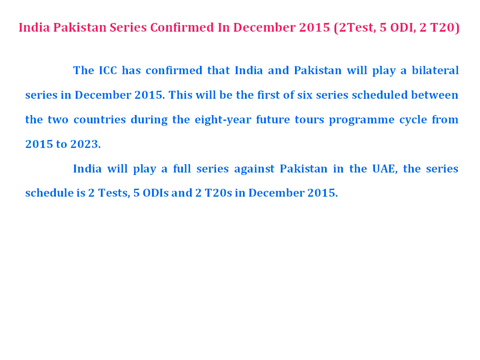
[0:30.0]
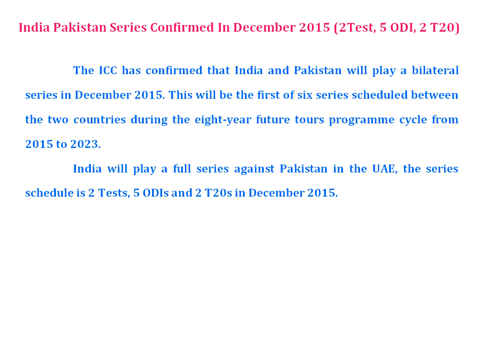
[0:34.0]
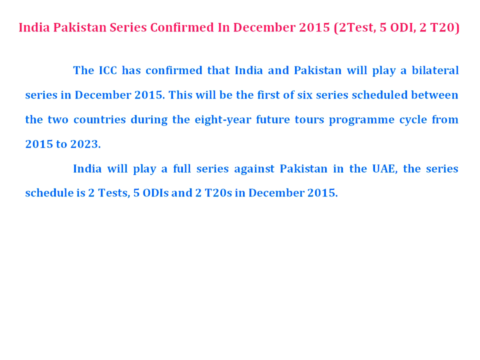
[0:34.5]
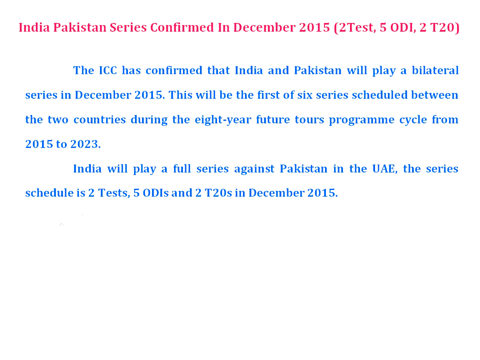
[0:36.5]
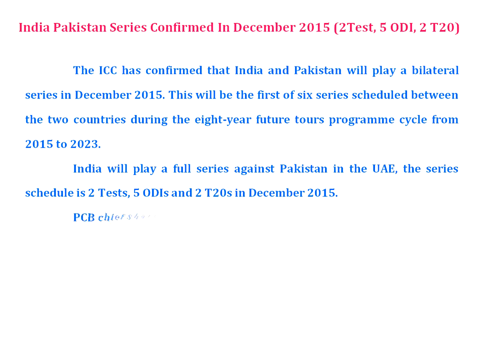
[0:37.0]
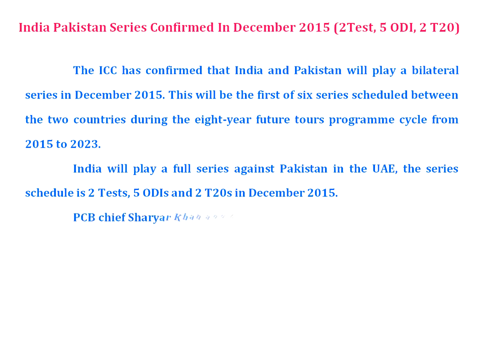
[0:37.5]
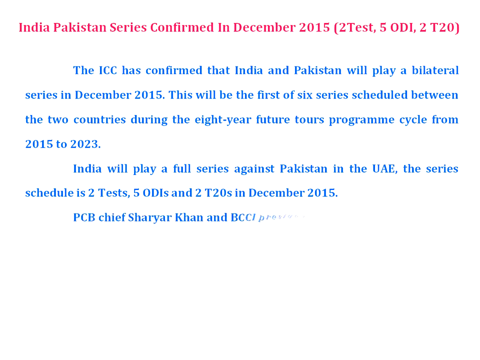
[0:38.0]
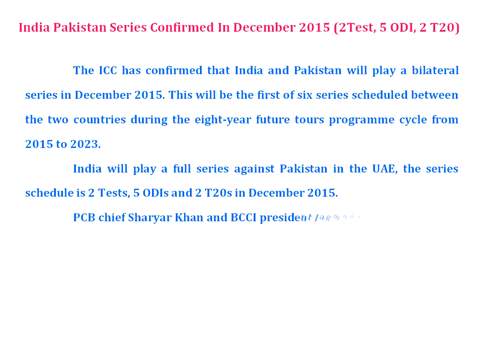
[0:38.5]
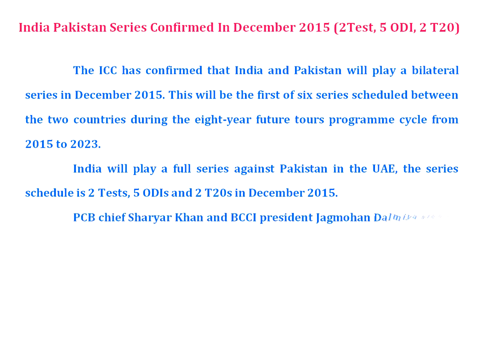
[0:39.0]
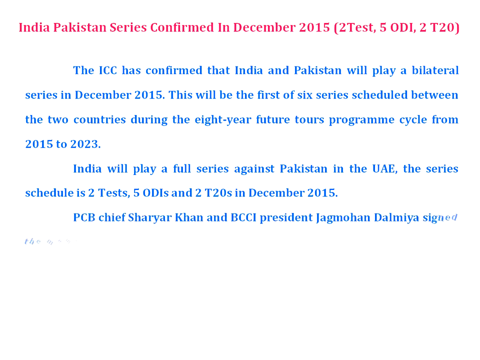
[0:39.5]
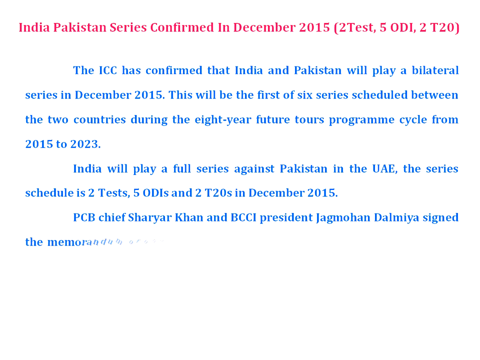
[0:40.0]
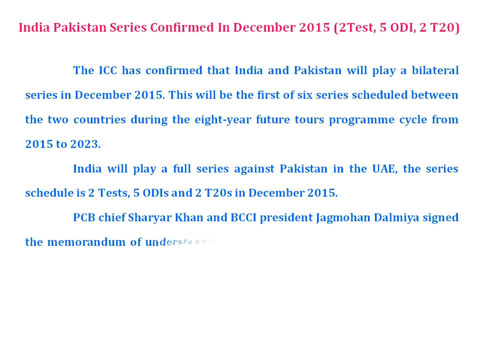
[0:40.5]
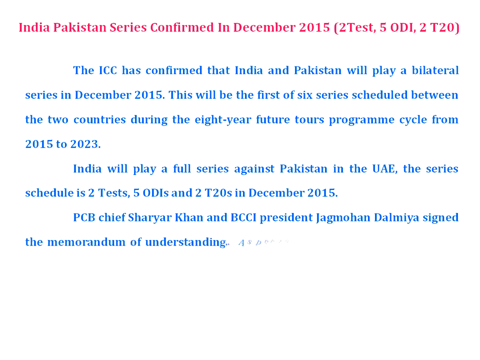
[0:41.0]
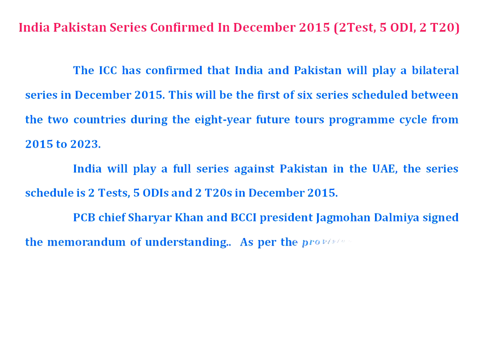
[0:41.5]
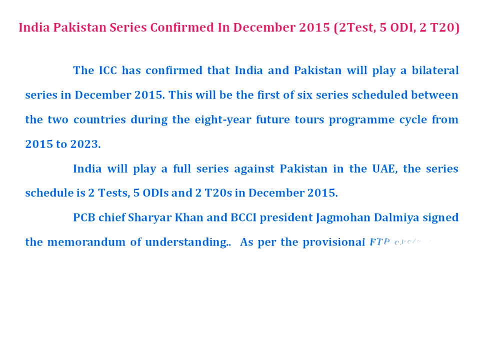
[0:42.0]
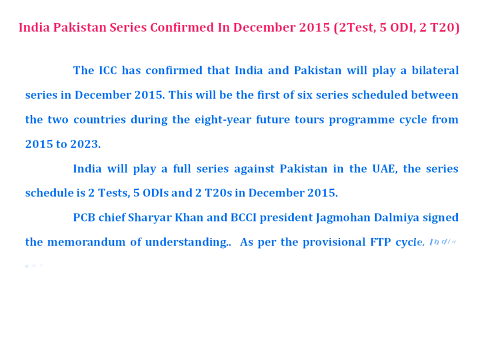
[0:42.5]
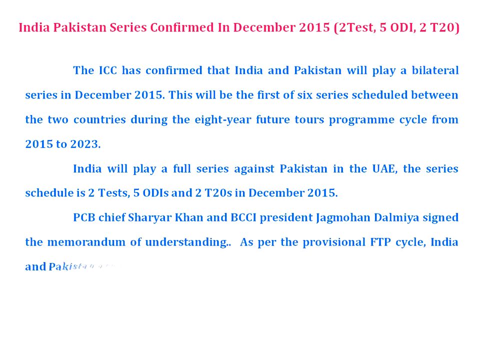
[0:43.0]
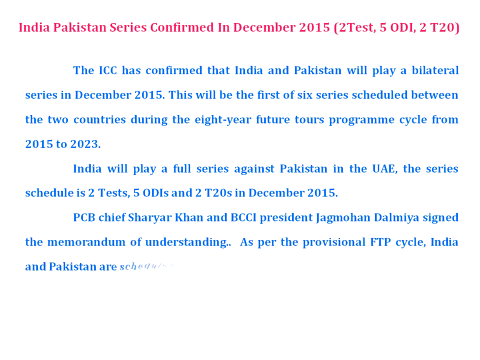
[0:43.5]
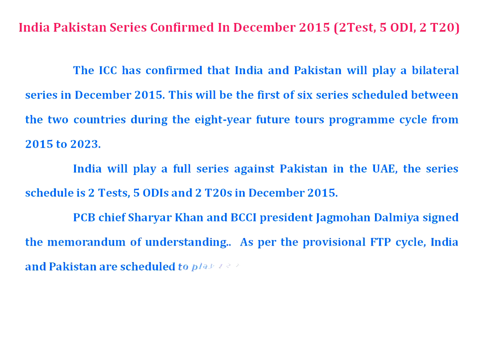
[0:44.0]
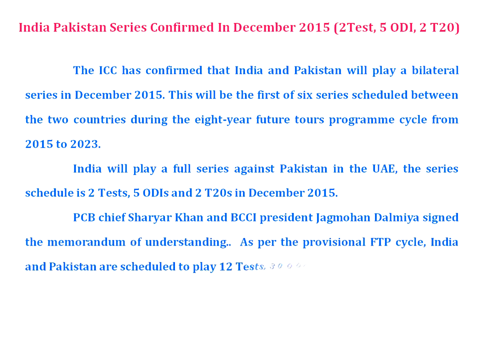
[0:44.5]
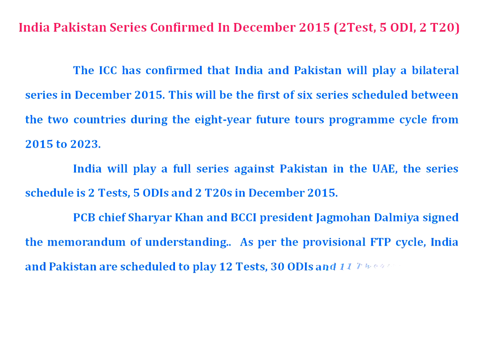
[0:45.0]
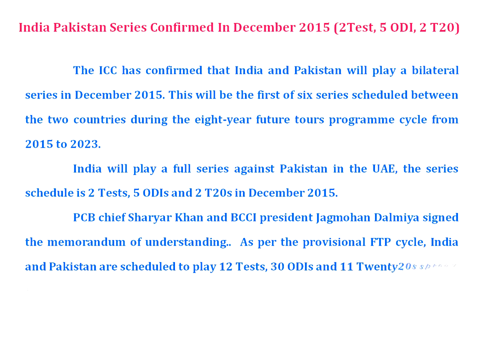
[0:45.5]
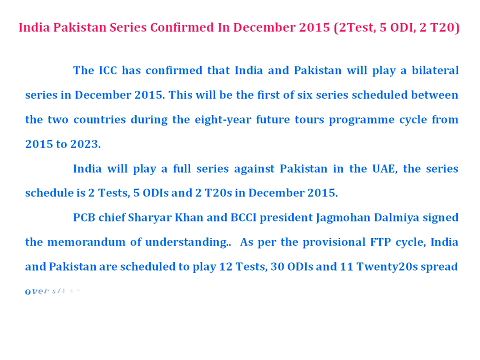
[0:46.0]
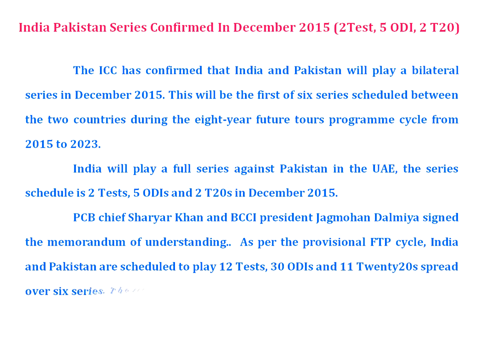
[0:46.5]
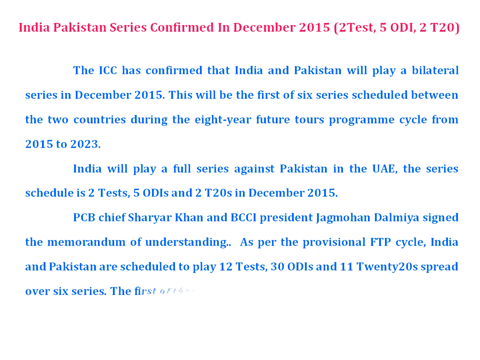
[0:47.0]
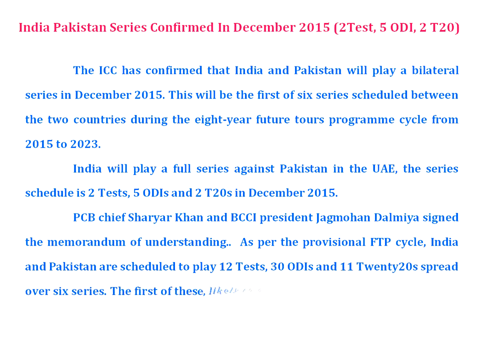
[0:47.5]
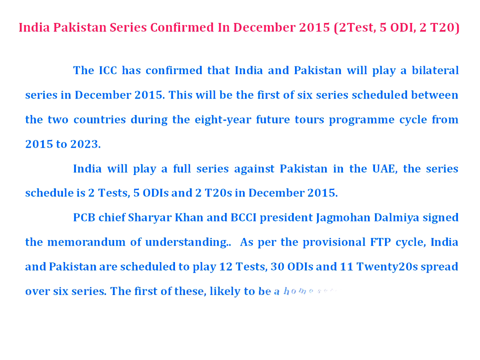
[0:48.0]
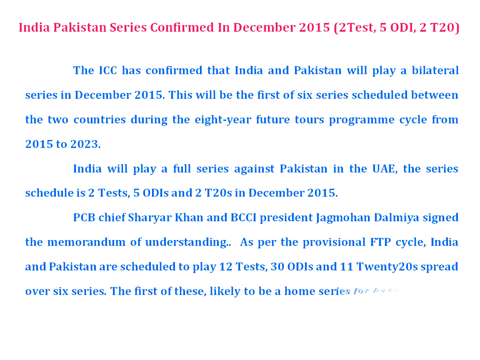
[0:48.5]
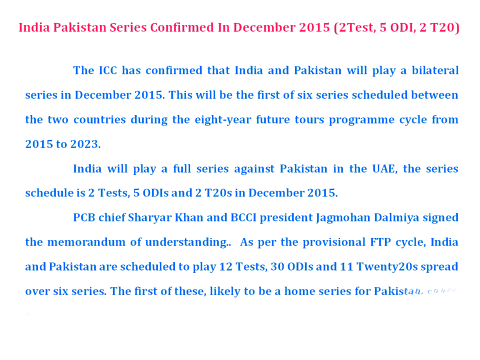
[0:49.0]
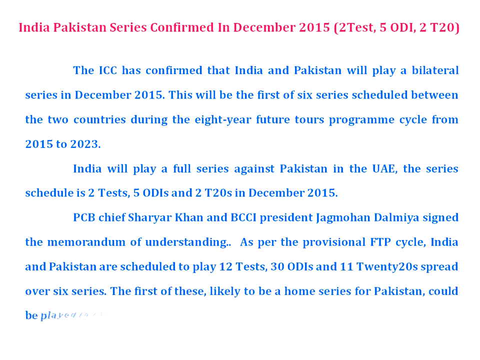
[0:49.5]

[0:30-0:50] The white screen with the pink title and blue paragraphs remains, and a new paragraph in blue lettering begins coming onto the screen with a kind of effect where it appears as it goes. It reads "PCB Chief Sharir Khan and BCCI President, Jagoman Dalmia, sign the memorandum of understanding as per the provisional FTP cycle, India and Pakistan are scheduled to play 12 tests, 30 ODIs and 11 T20s spread over six series," followed by "the first of these, likely to be a home series for Pakistan, could be played in the UAE." The white background, pink title and earlier paragraphs are unchanged; only this last paragraph is added, and the white screen is now full of blue words beneath the pink title.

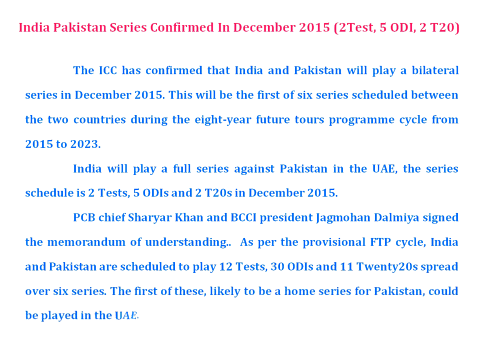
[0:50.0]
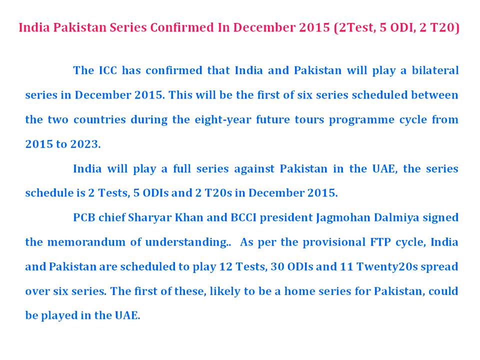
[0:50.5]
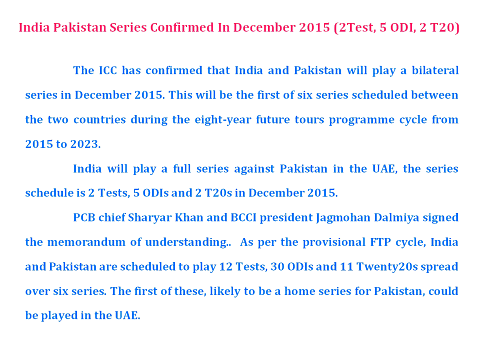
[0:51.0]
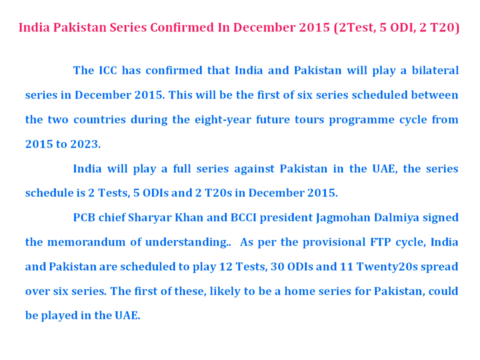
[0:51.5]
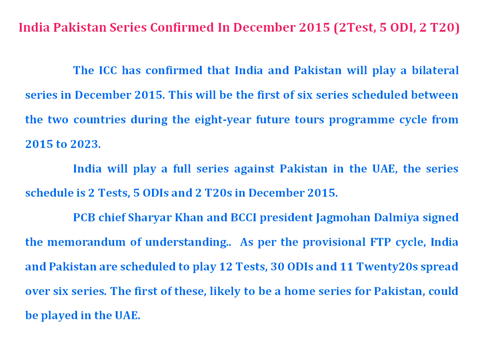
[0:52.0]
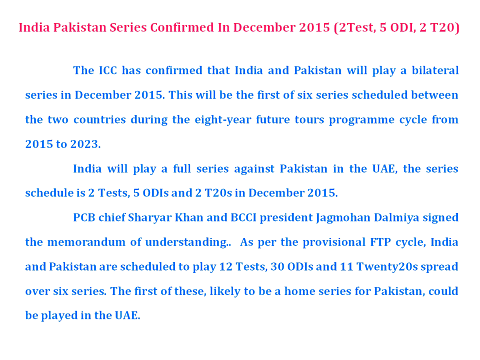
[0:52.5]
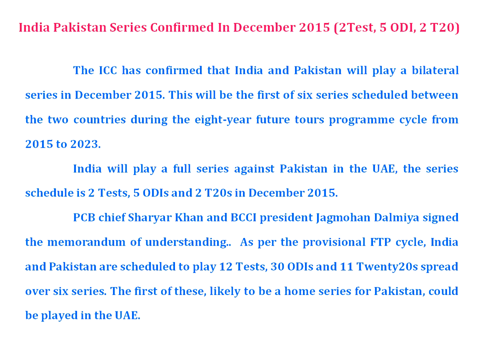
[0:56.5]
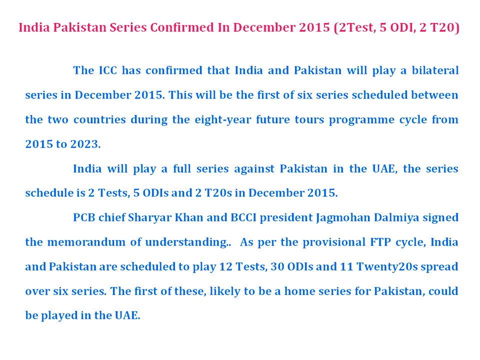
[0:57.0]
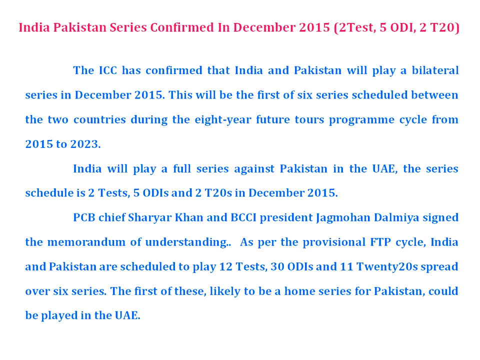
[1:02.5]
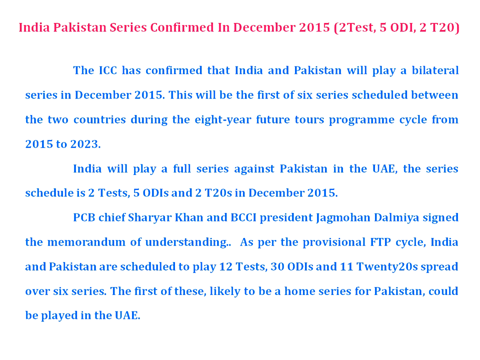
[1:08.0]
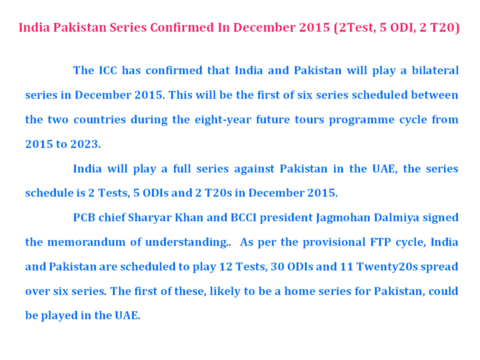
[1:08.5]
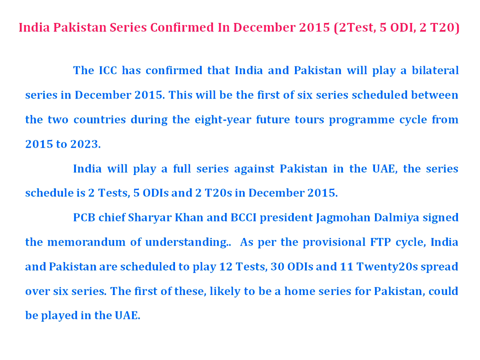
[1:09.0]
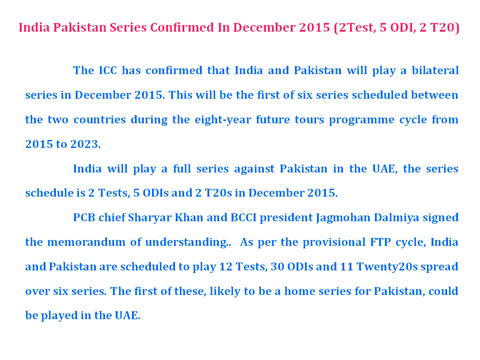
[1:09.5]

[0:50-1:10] The same screen stays up for a while. The only thing on it is the white background with the pink title reading "India Pakistan series confirmed in December 2015 (two test, five ODI, two T20)" and three paragraphs in blue lettering, in a slightly smaller font than the title but the same bold font style. The paragraphs give details about the series and where the games will be played, noting six series in total between 2015 and 2023, of which this is the first. There are no images, just the one screen unveiled paragraph by paragraph.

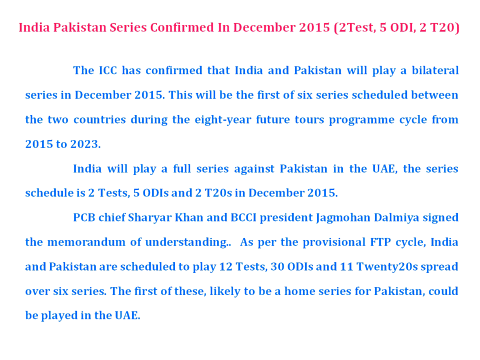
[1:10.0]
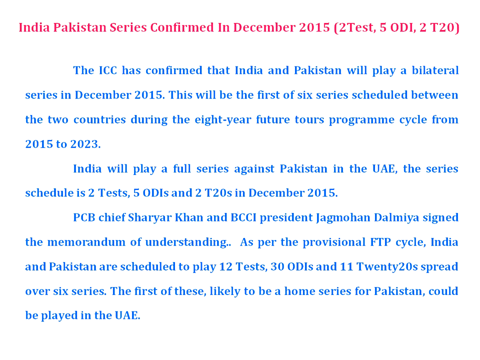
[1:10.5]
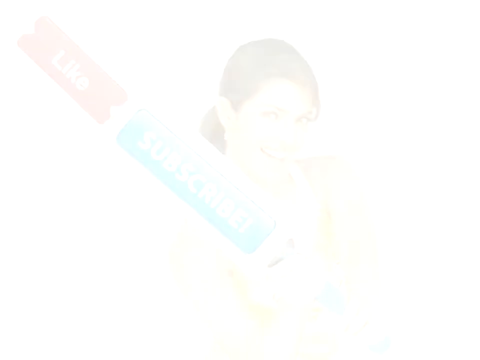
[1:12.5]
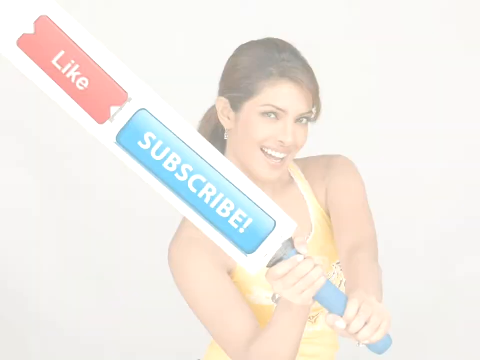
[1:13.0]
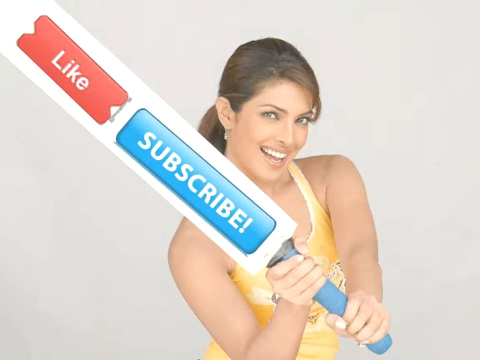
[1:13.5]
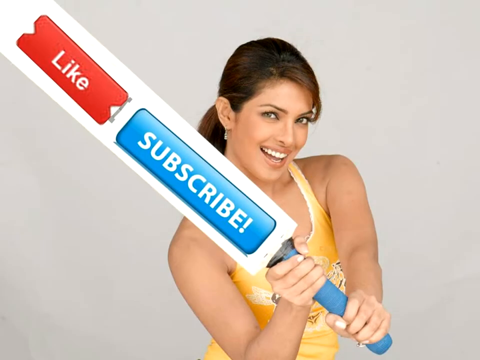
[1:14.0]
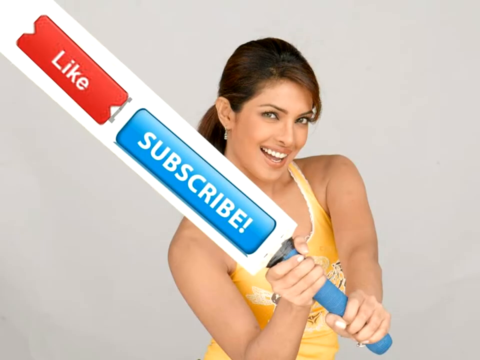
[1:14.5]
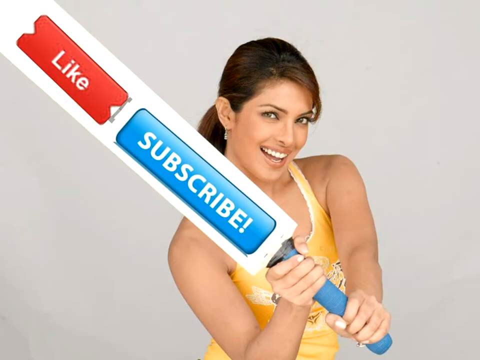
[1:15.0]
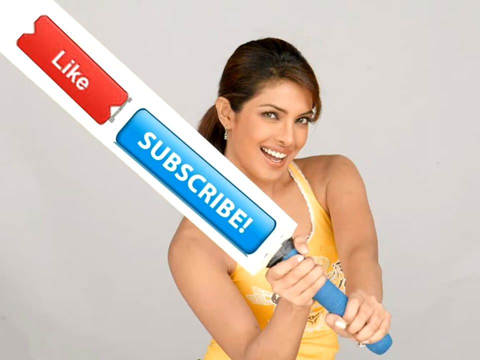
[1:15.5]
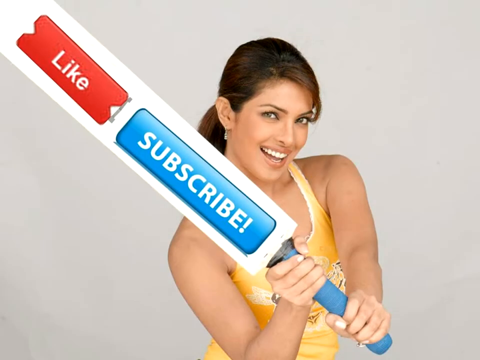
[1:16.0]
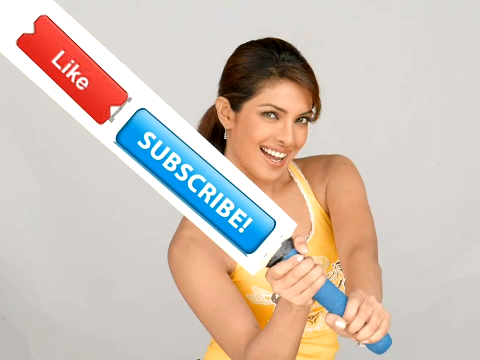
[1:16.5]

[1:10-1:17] The screen quickly changes to a new one with a light gray background showing a photograph of a woman with brown hair in a ponytail, wearing a yellow tank top, seen from her head to about her mid torso. She is smiling and posing, holding a paddle that says "like" in a red box and "subscribe" in a blue box. Her yellow tank top appears to have some white and black images on it, cut off by the paddle she holds.